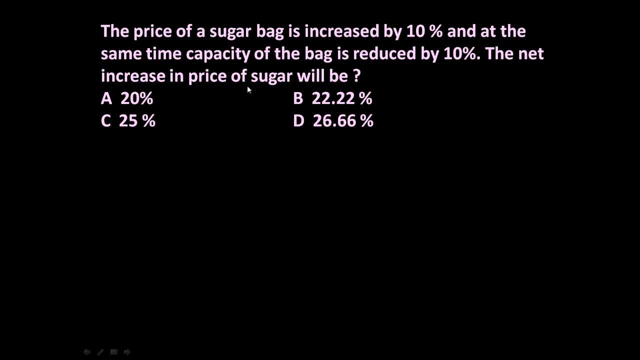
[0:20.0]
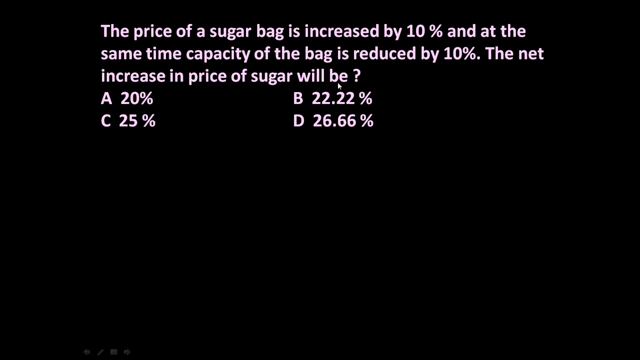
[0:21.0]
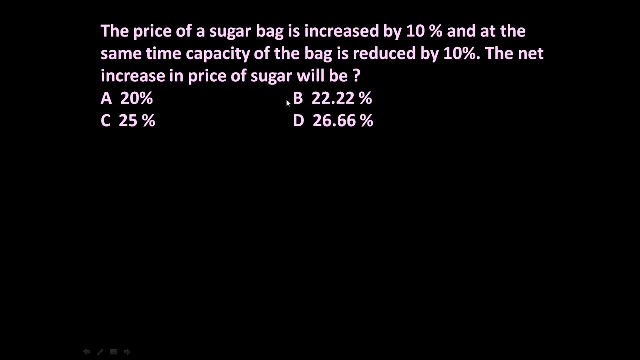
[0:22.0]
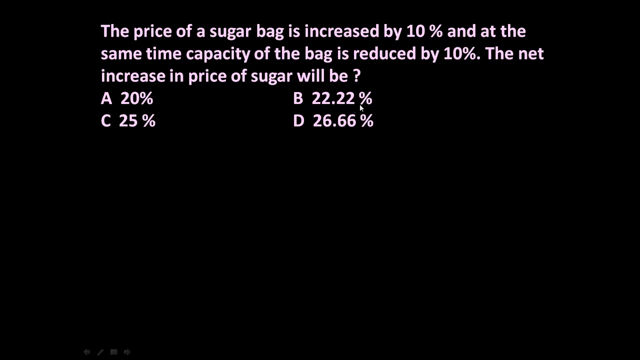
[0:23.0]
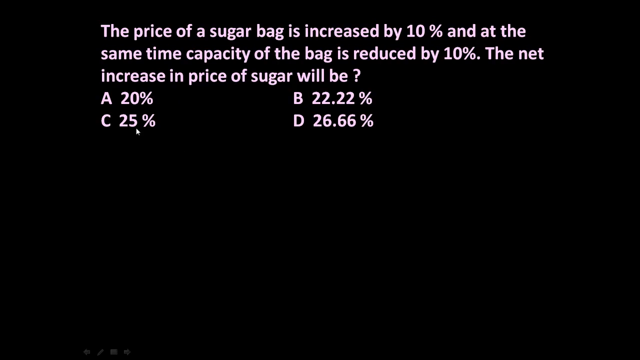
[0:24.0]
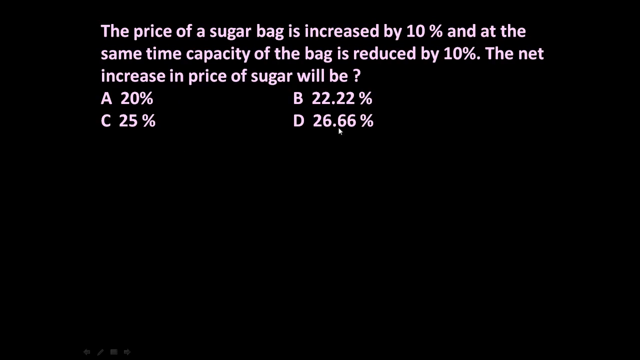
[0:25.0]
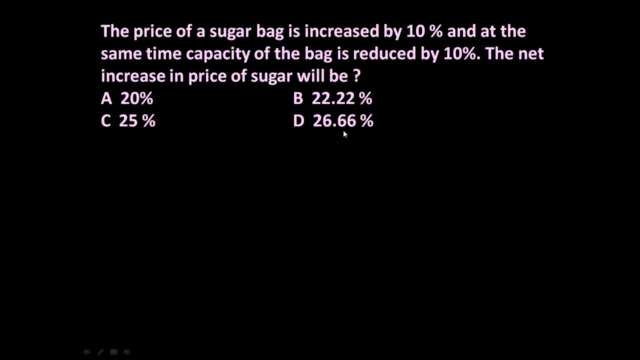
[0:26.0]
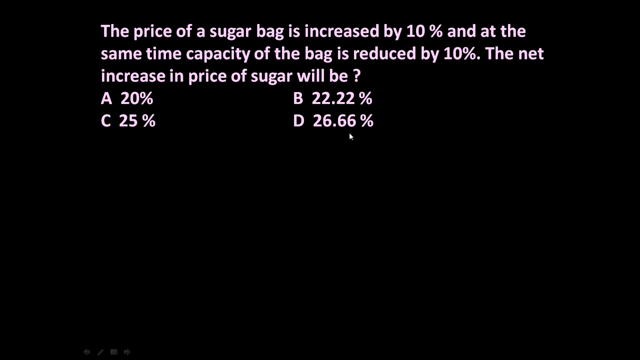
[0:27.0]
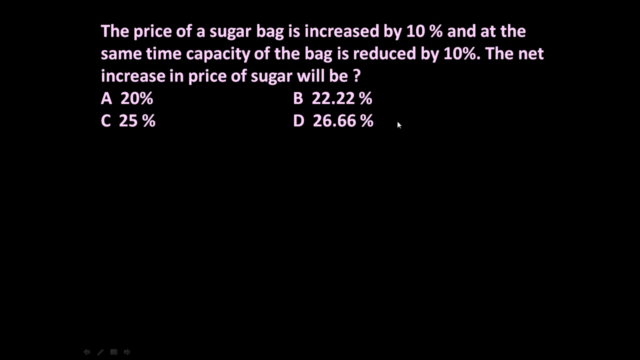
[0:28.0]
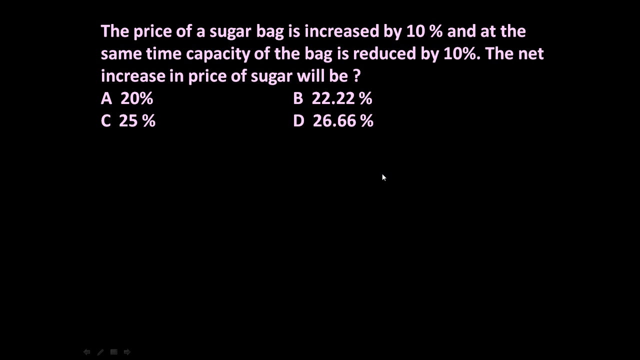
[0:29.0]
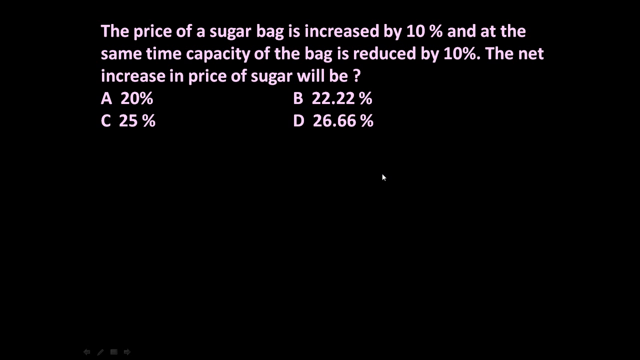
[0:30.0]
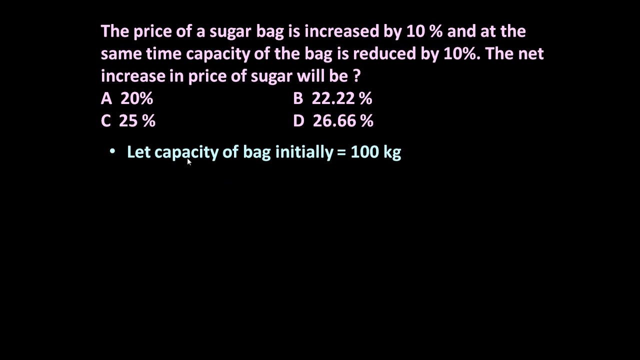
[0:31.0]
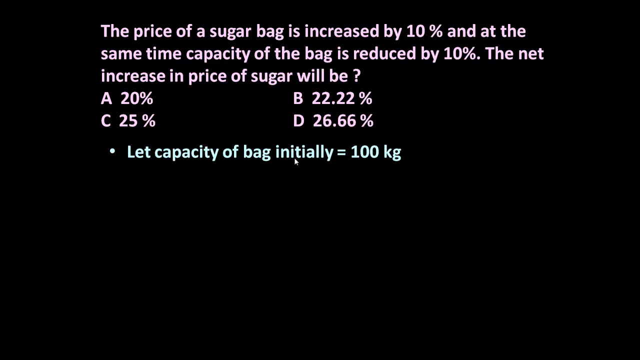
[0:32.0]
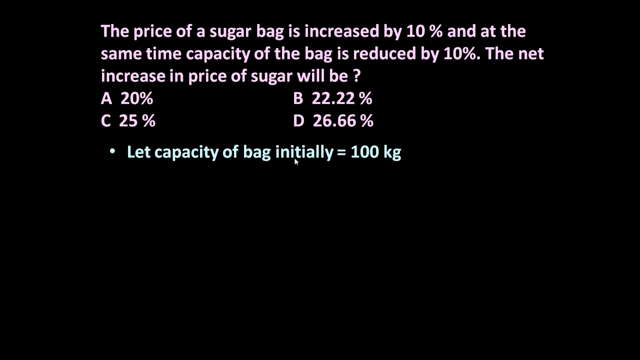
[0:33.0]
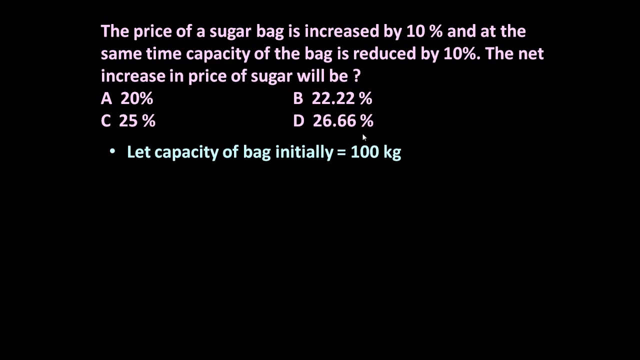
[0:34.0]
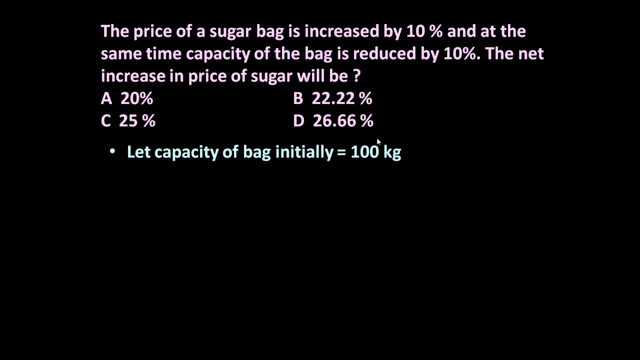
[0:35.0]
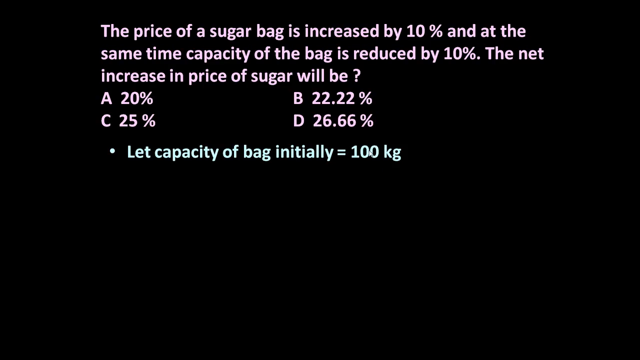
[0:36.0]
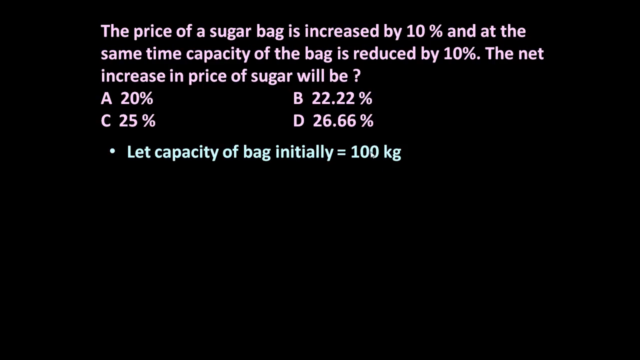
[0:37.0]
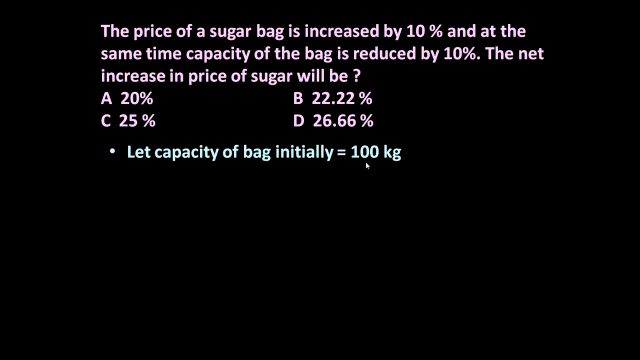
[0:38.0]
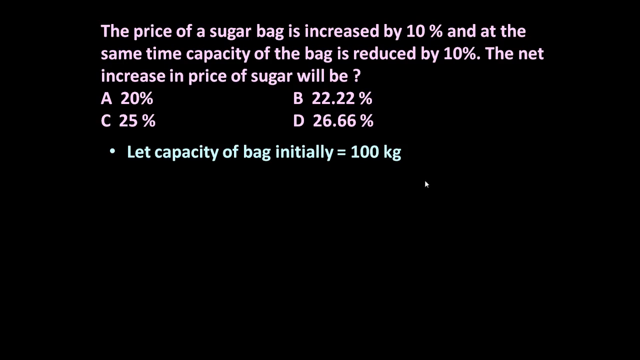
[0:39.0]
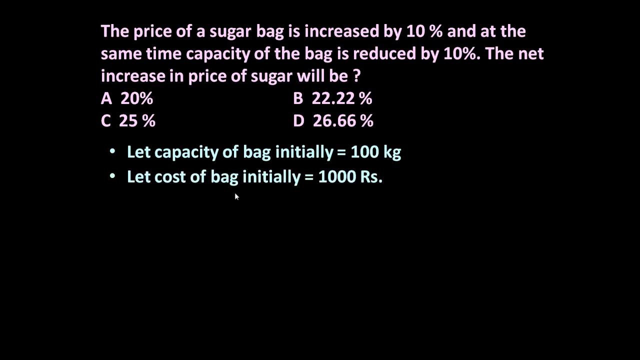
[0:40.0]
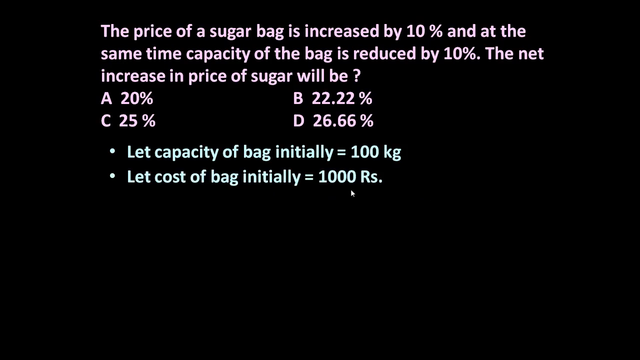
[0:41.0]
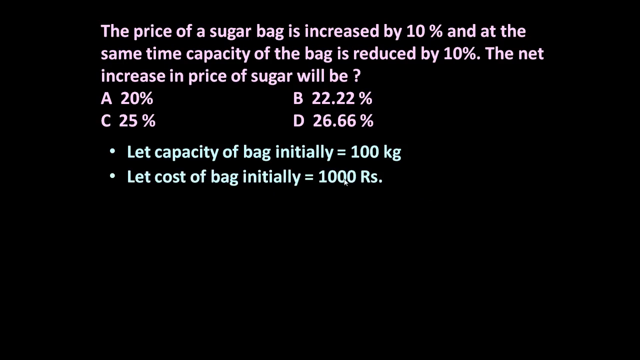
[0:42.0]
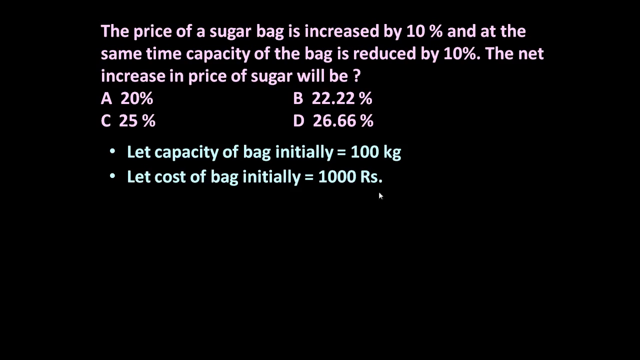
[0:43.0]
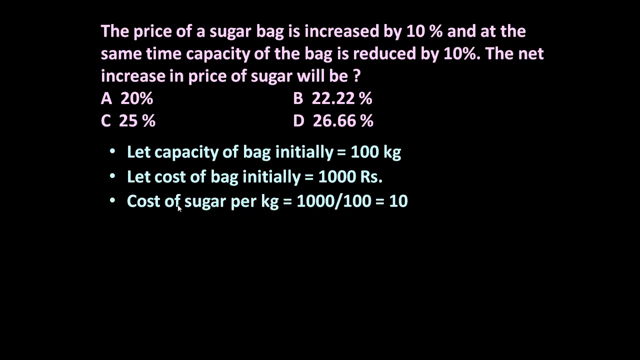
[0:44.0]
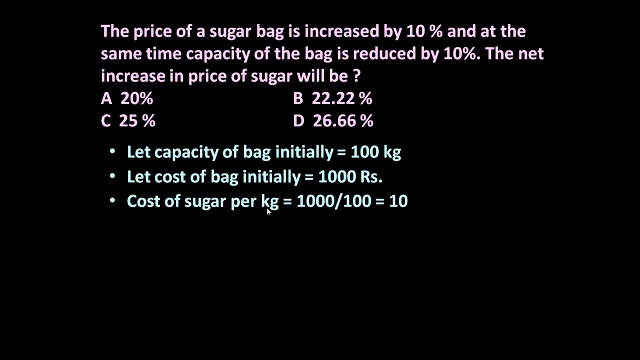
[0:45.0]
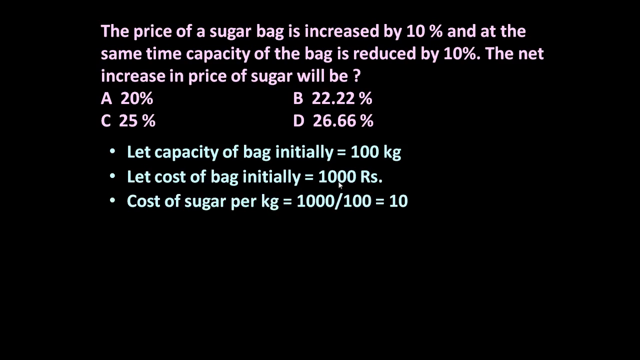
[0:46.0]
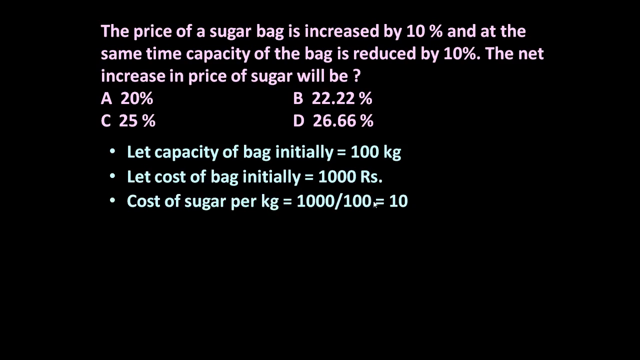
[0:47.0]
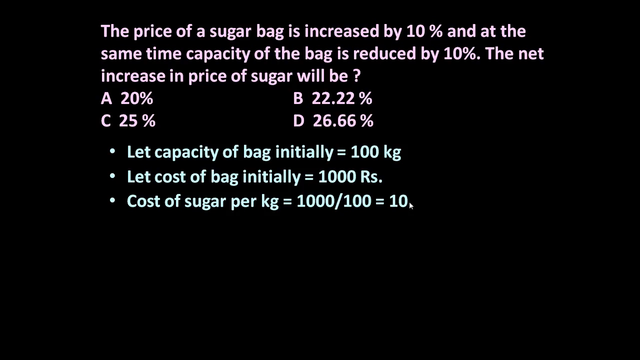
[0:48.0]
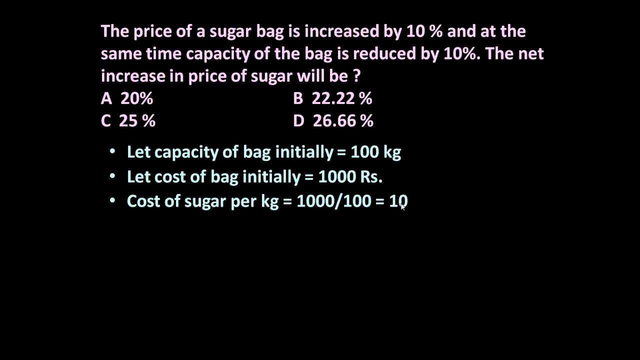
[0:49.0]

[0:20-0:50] The cursor continues line by line, hovering just beneath each line of text. It then jumps from answer option to answer option, starting at A, moving right to B, down and to the left for C, and right for D. The cursor hovers on the screen and makes some circular gestures, and an answer fades onto the screen underneath the text in white. The answer then appears in mint green with a circular bullet point and reads "Let capacity of bag initially equals 100 kilograms." The cursor circles counterclockwise around the 100 multiple times, then moves under this text as another bullet point fades in with an animation, reading "Let cost of bag initially equal 1000 Rs." A next bullet point follows in the same mint green text, reading "Cost of sugar per kg equals 1000 over 100 equals 10."